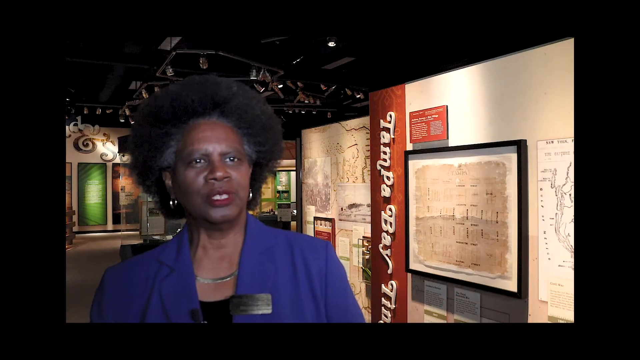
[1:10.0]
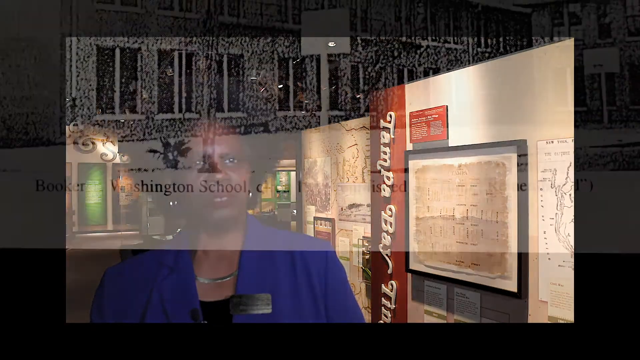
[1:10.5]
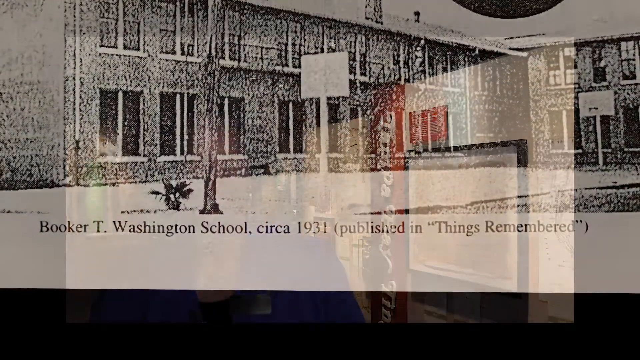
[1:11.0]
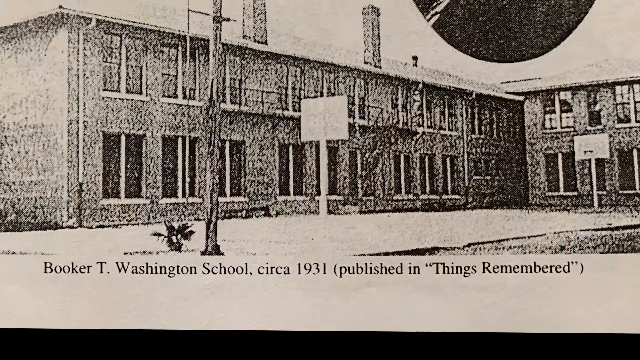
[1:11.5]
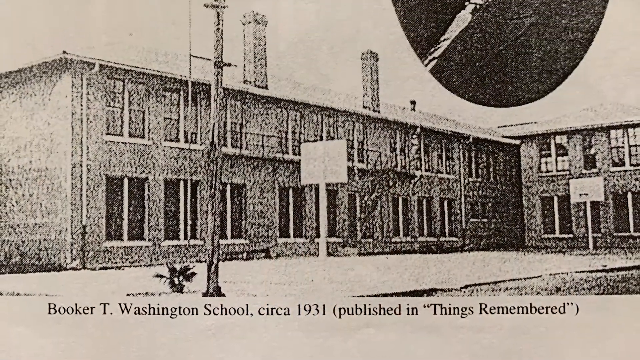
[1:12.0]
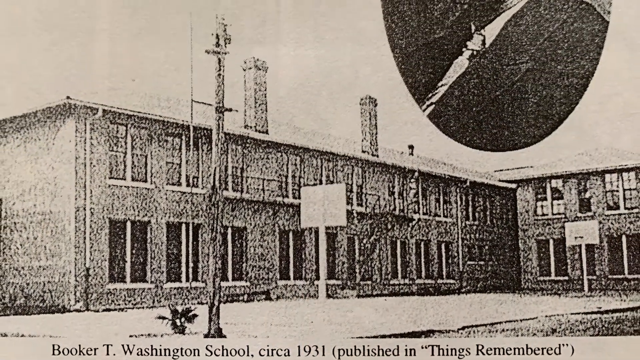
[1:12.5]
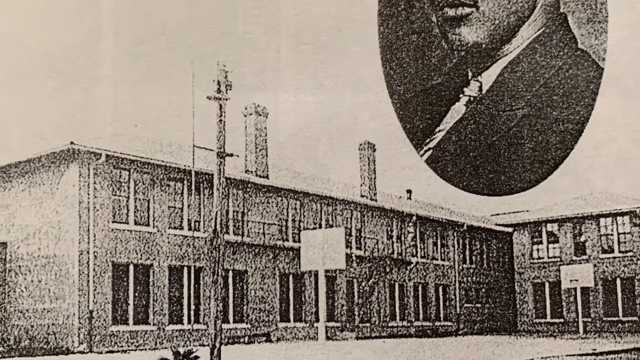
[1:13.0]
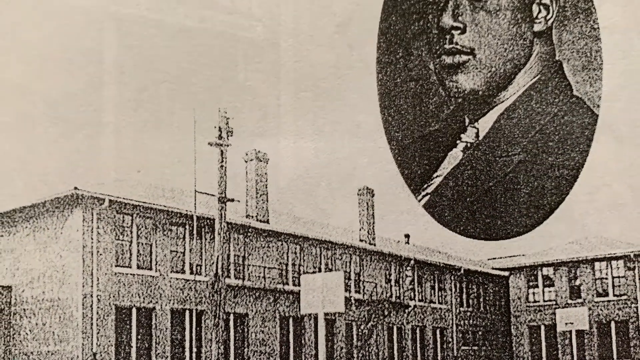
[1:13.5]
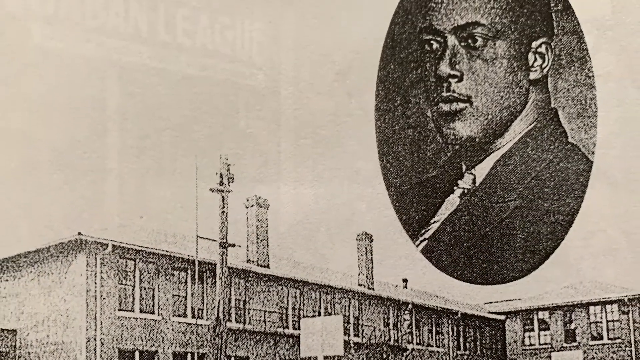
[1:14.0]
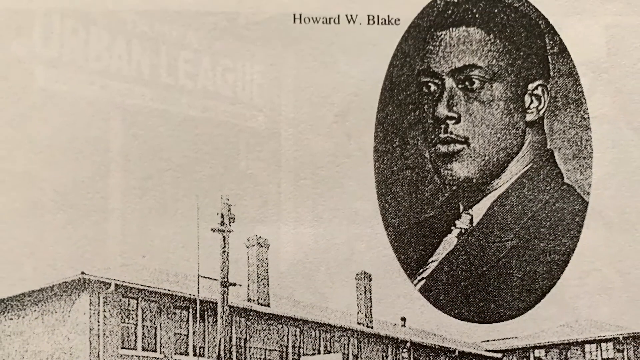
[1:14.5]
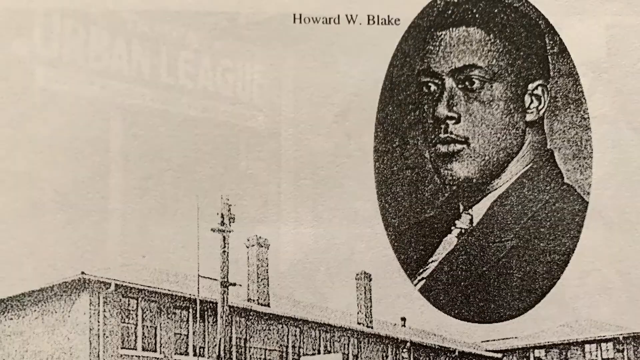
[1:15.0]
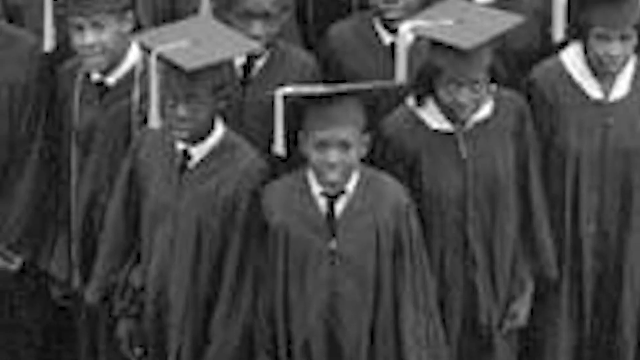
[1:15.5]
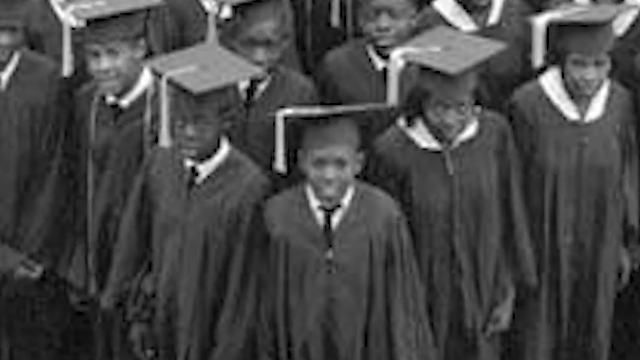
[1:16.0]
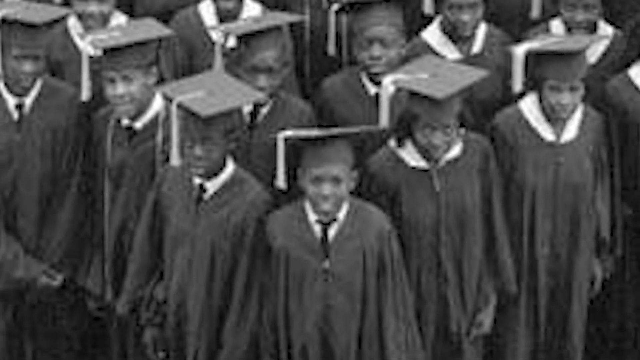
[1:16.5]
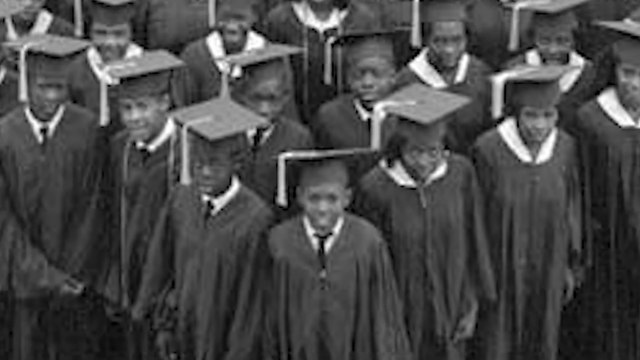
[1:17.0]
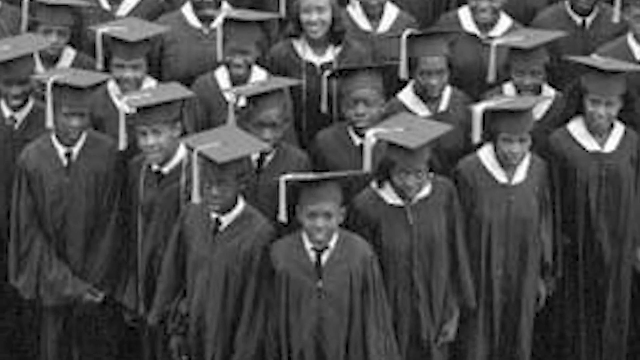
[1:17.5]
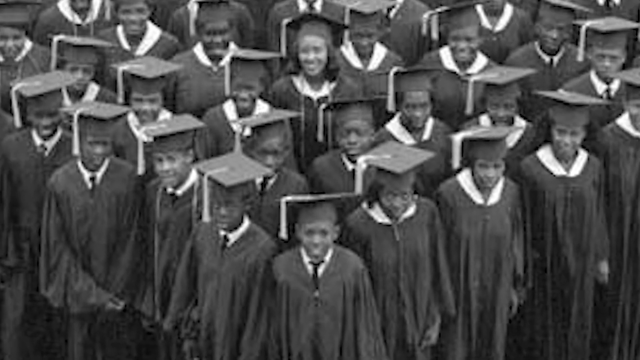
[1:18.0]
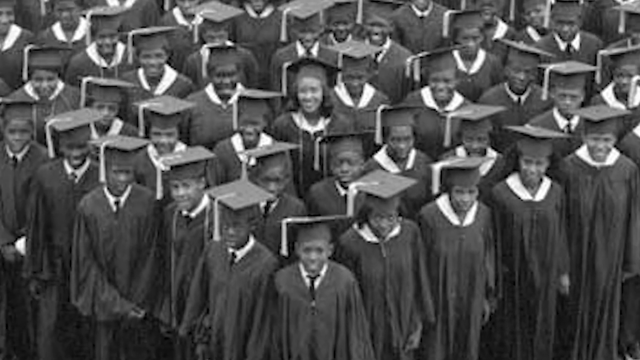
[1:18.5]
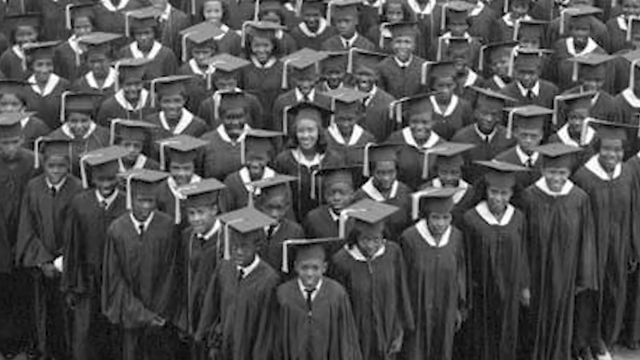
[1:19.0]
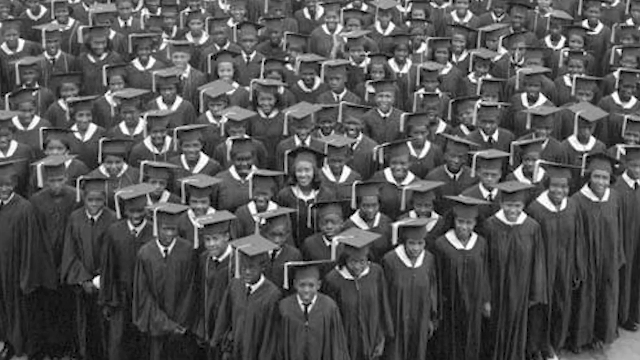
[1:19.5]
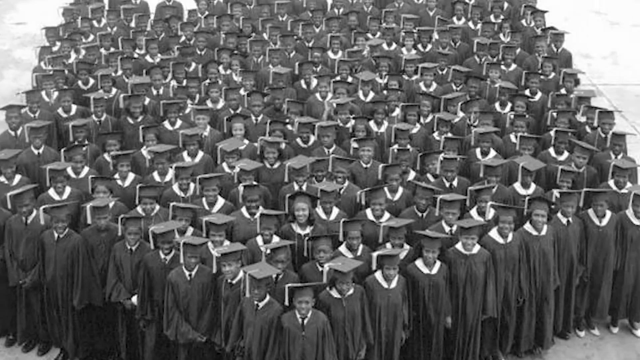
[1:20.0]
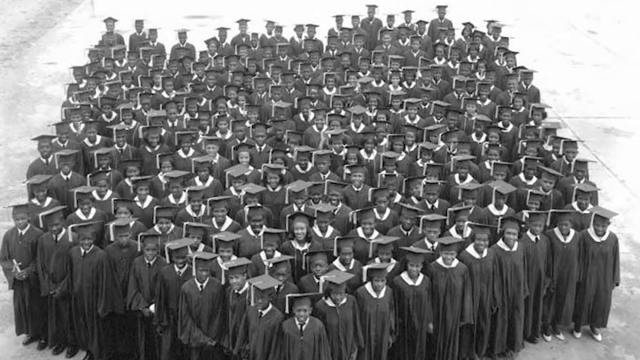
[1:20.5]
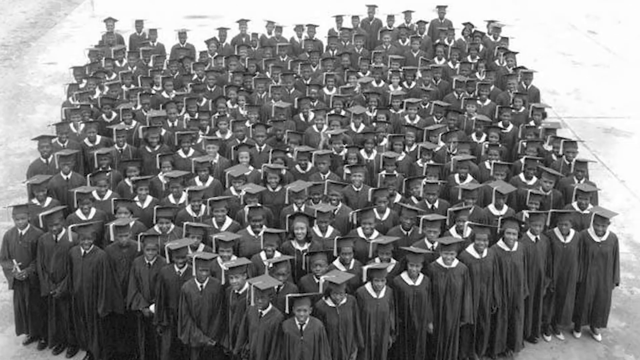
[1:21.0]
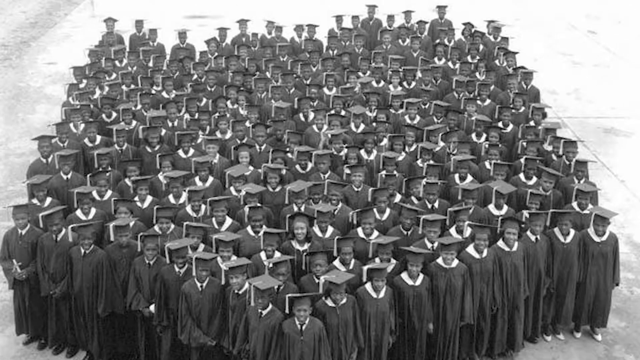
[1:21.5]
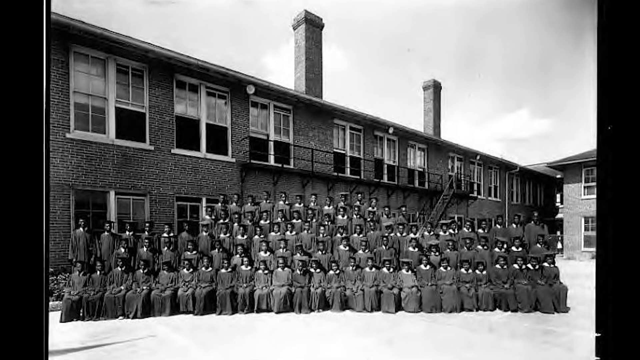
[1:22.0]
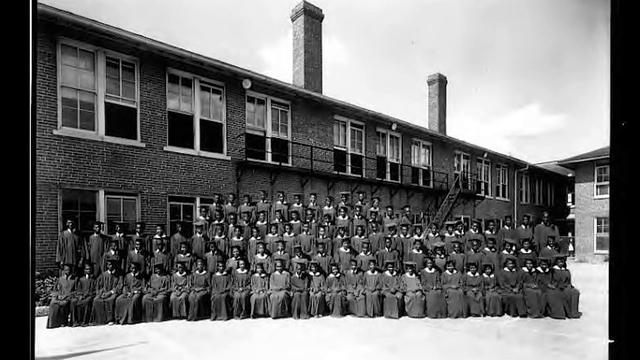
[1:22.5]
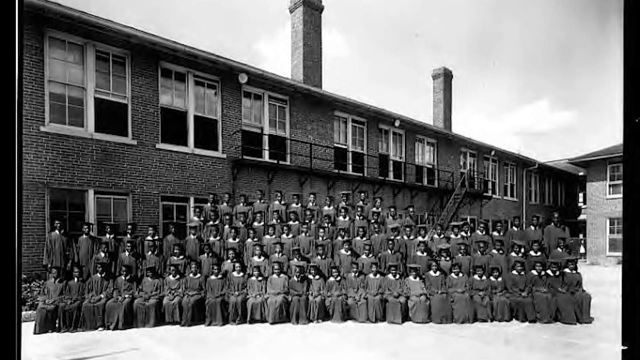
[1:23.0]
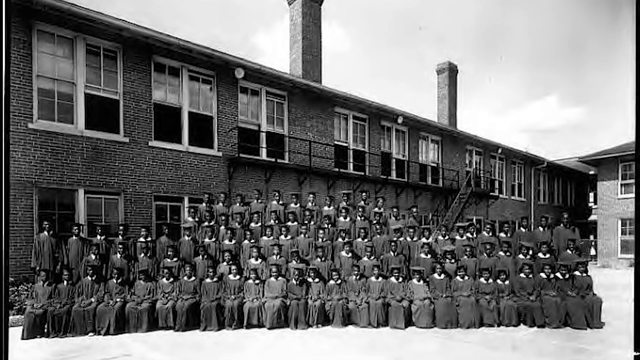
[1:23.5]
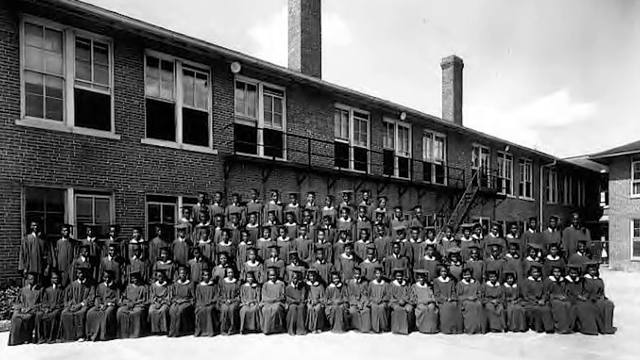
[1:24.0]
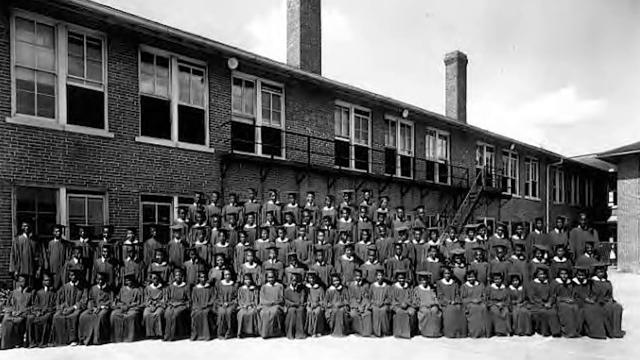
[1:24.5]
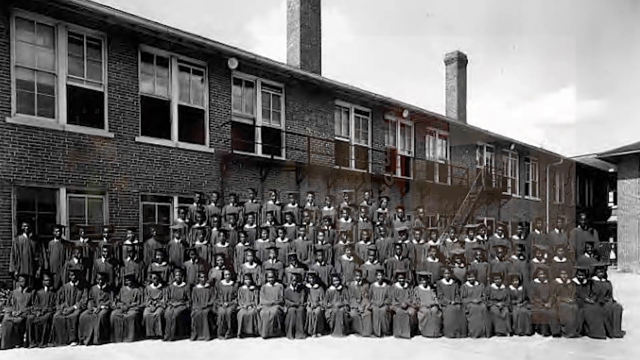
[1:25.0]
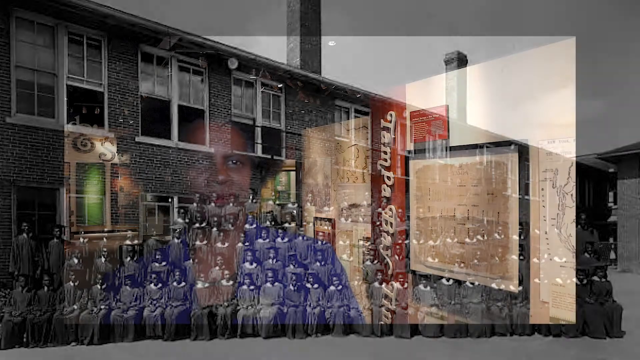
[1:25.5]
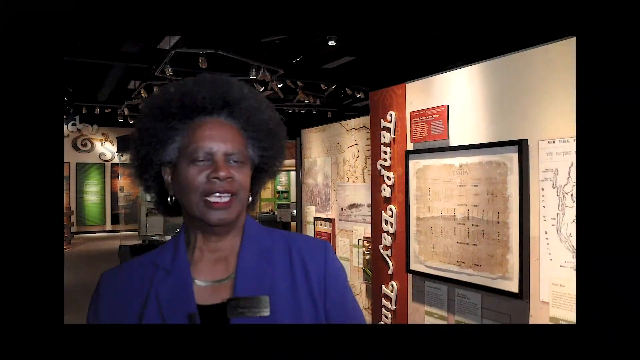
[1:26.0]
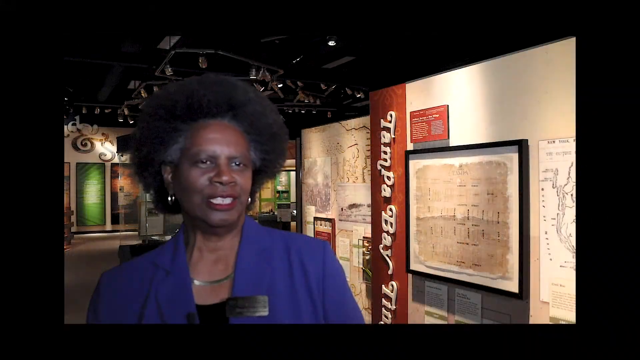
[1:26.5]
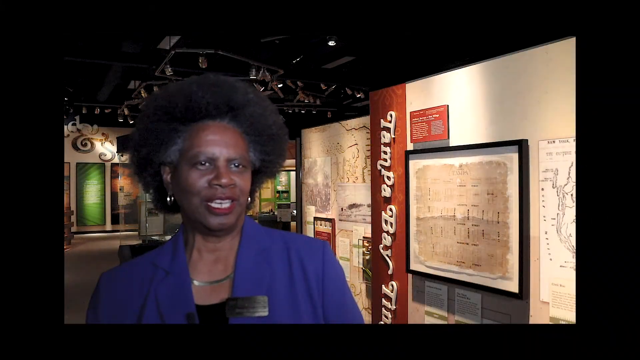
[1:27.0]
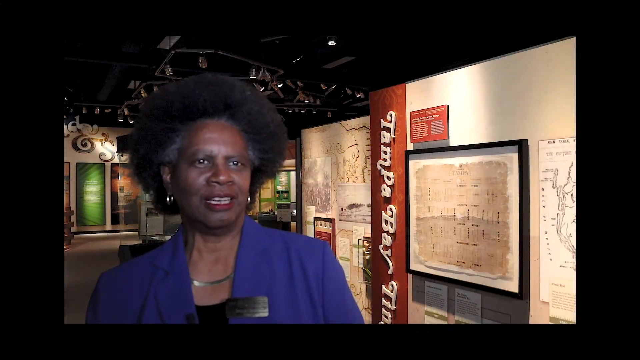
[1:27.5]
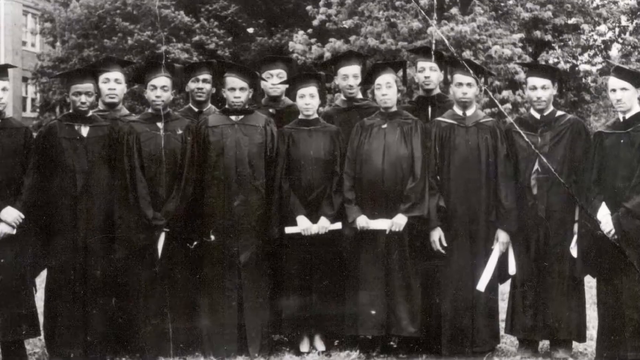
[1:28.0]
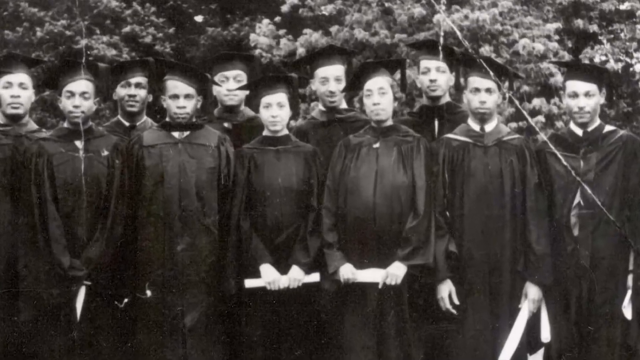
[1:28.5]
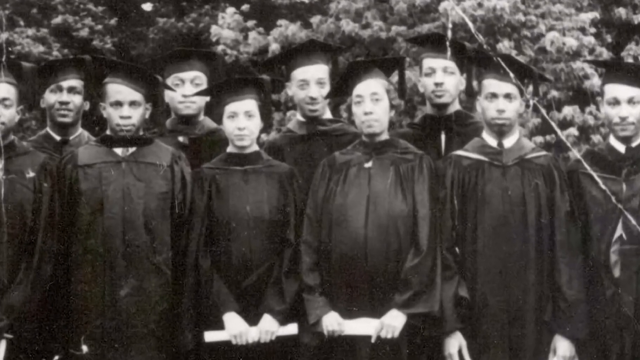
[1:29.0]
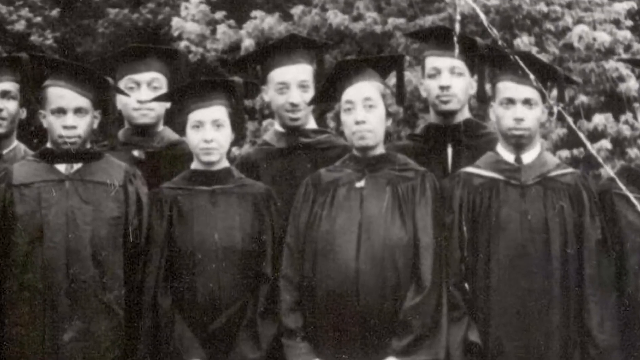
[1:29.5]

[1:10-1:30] The Booker T. Washington School circa 1931 is shown, with text saying "published in Things Remembered." The black-and-white picture shows what appears to be quite a large school; it looks to be two-story and is more than one building. In the top right-hand corner is an oval picture of an African-American gentleman, with the name "Howard W. Blake" next to it. A black-and-white picture then shows what appears to be a large class of graduating students in graduation gowns and caps, smiling, with some holding their diplomas in their hands. Another, somewhat clearer picture shows students seated in caps and gowns in front of a good portion of the school, more of which is visible in this picture. Ersula Odom is seen speaking, and then another black-and-white scene shows what are probably the teachers at the school, standing in a group in black gowns that look like graduation gowns, with caps and different kinds of robes, holding what look like diplomas. The image zooms in on one of the teachers, who may be Blanche Armwood.